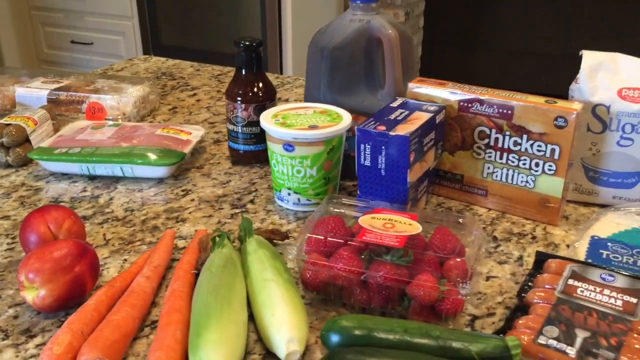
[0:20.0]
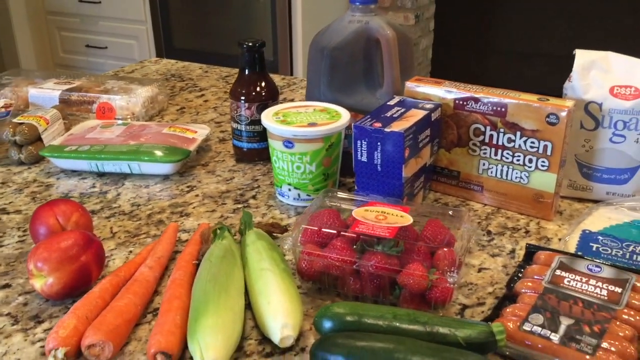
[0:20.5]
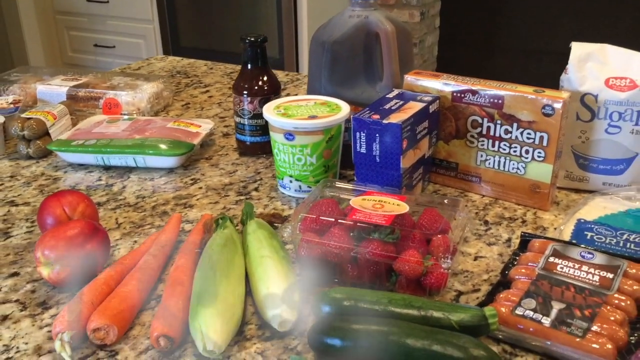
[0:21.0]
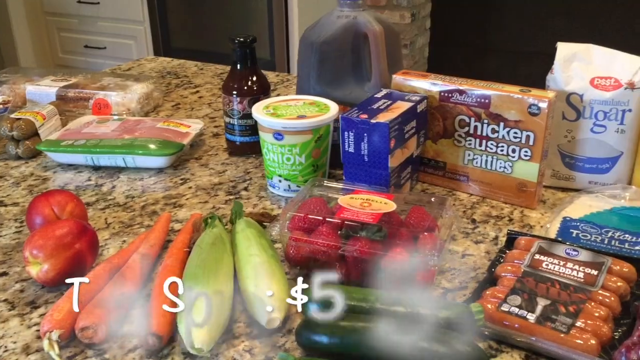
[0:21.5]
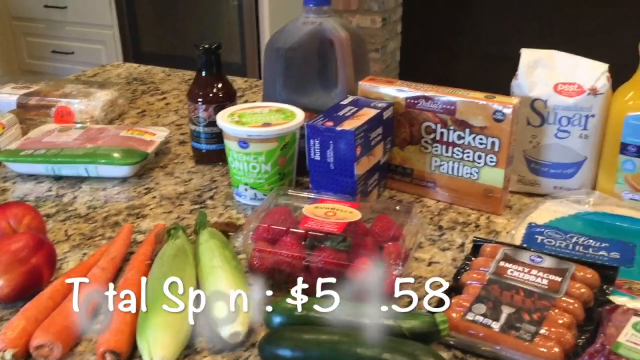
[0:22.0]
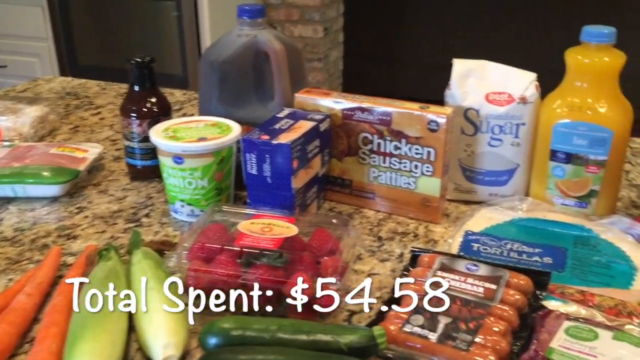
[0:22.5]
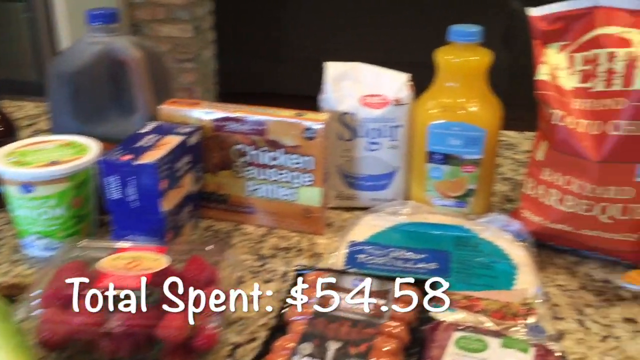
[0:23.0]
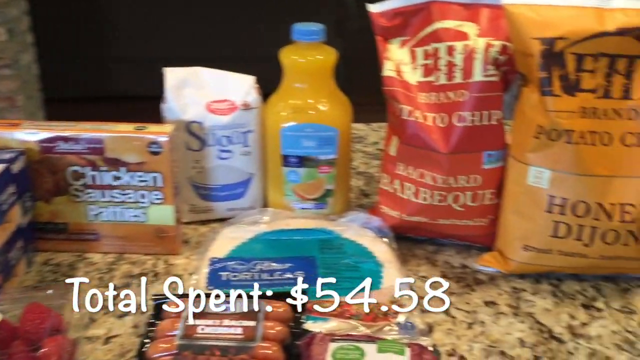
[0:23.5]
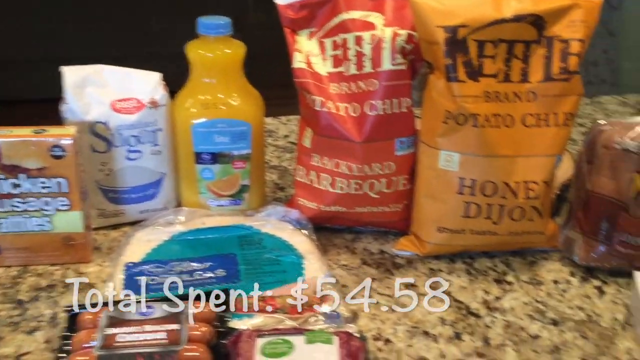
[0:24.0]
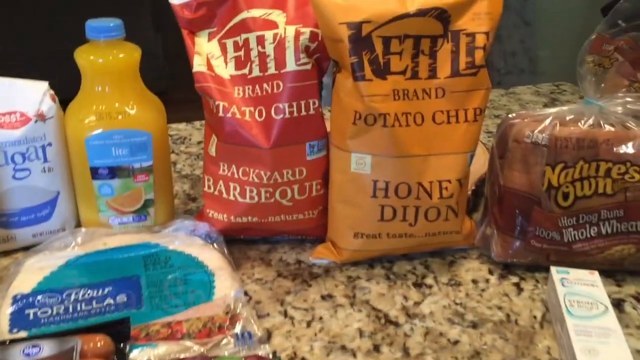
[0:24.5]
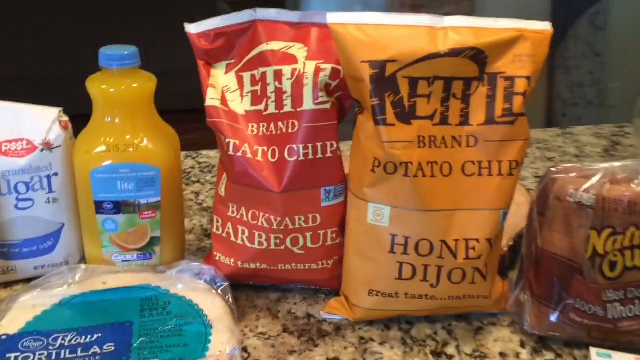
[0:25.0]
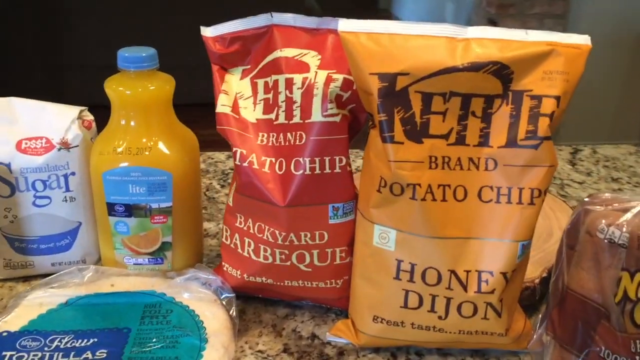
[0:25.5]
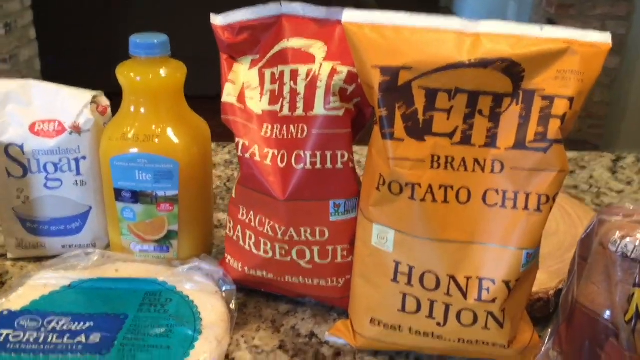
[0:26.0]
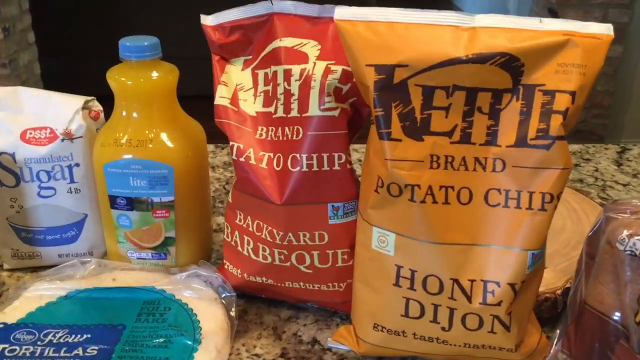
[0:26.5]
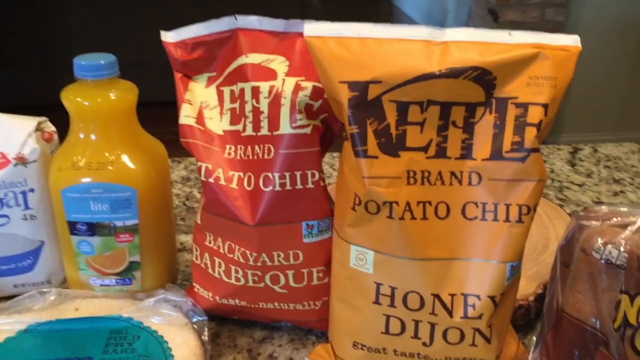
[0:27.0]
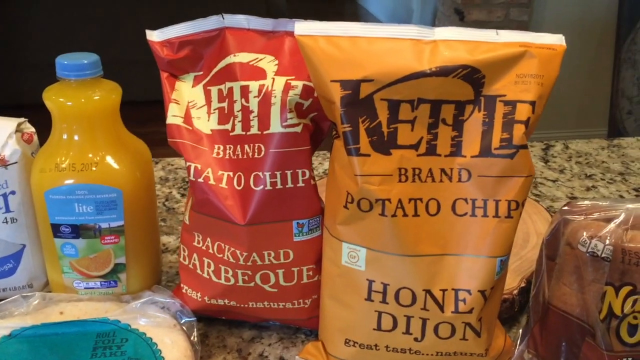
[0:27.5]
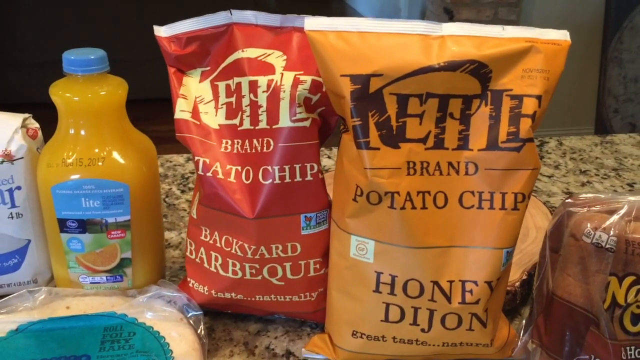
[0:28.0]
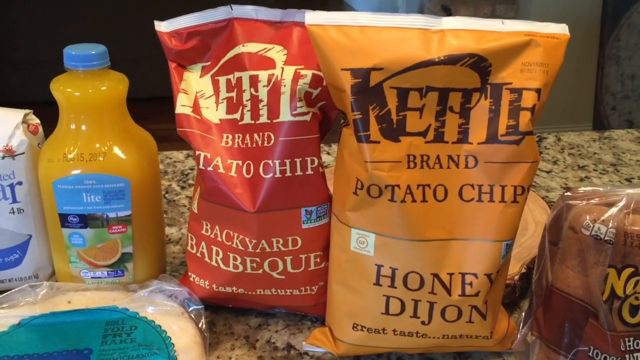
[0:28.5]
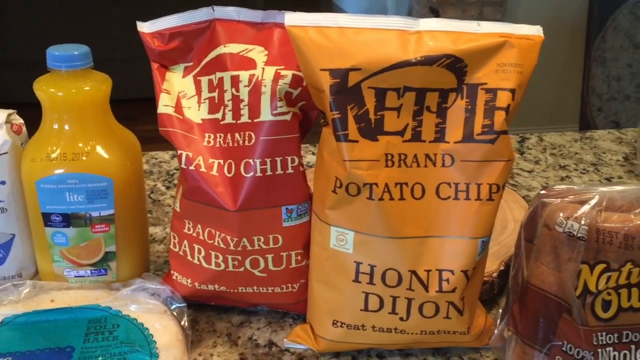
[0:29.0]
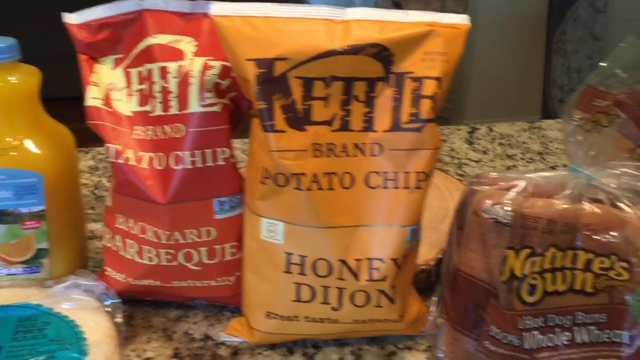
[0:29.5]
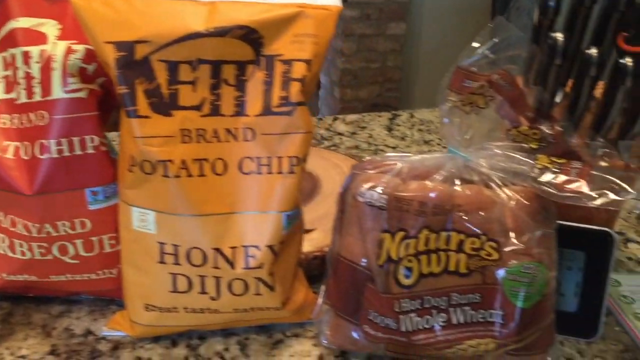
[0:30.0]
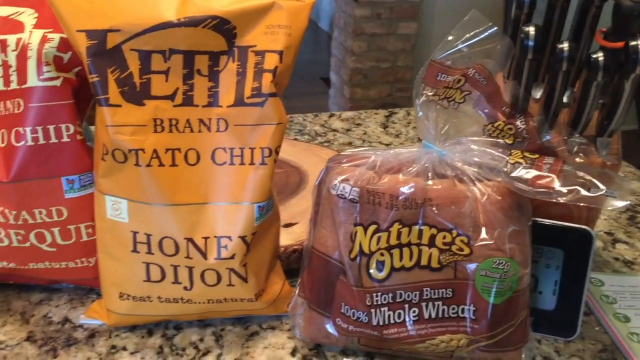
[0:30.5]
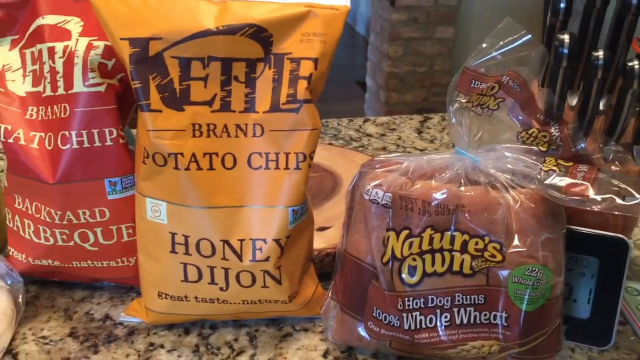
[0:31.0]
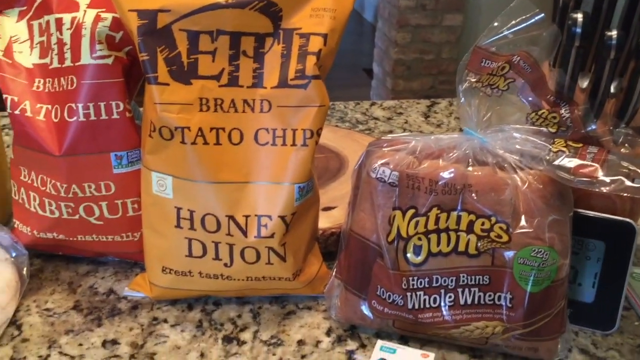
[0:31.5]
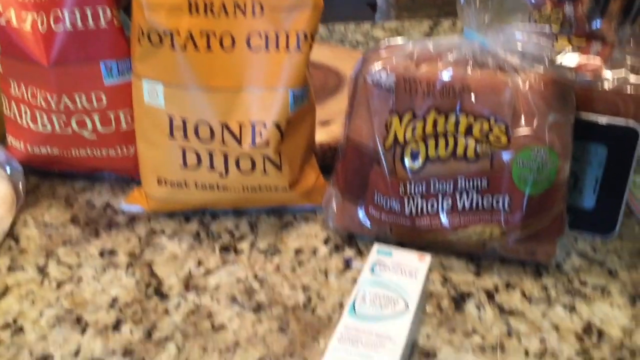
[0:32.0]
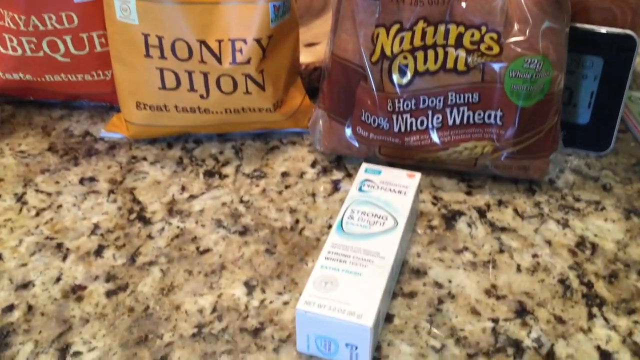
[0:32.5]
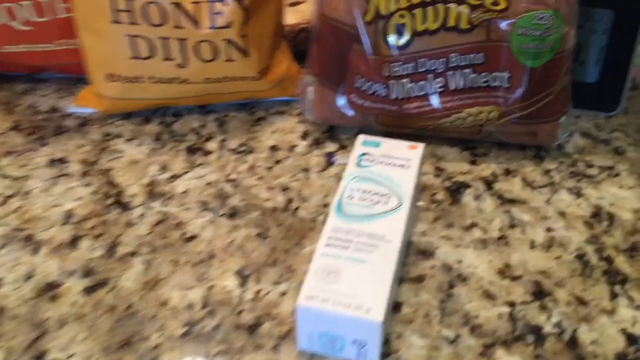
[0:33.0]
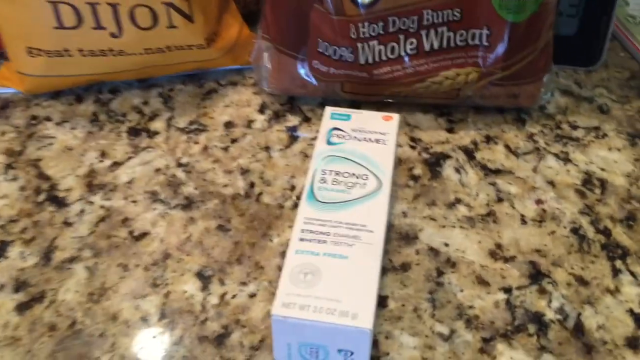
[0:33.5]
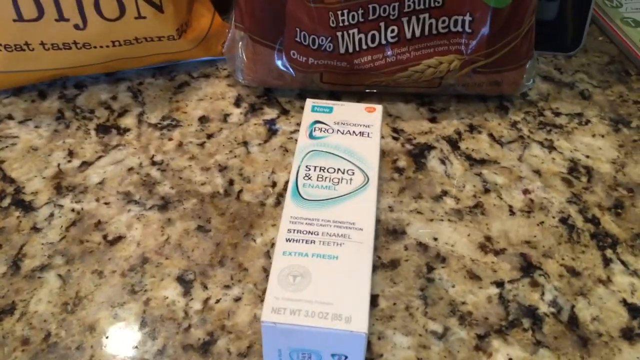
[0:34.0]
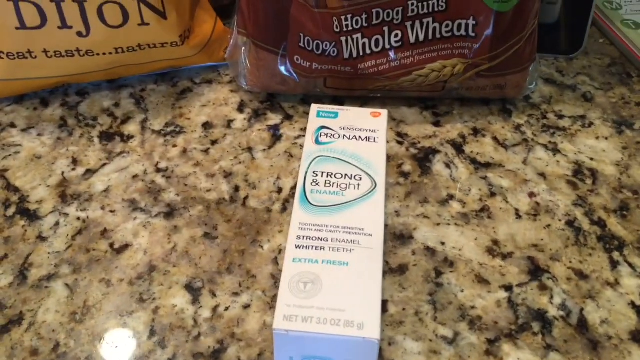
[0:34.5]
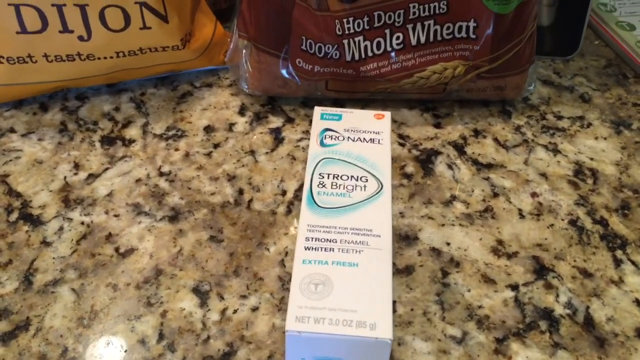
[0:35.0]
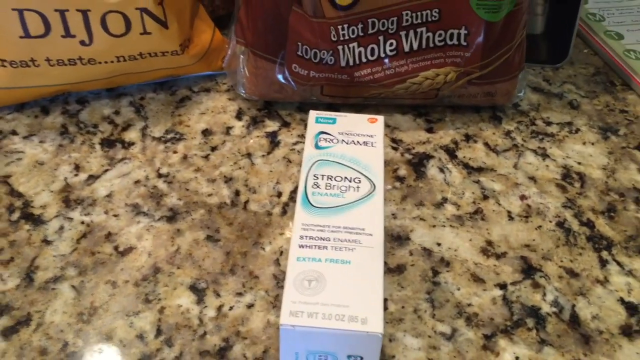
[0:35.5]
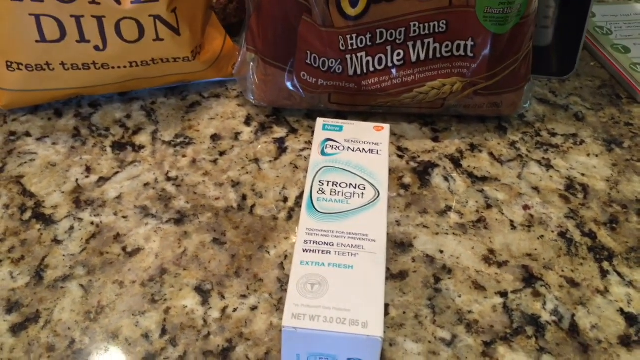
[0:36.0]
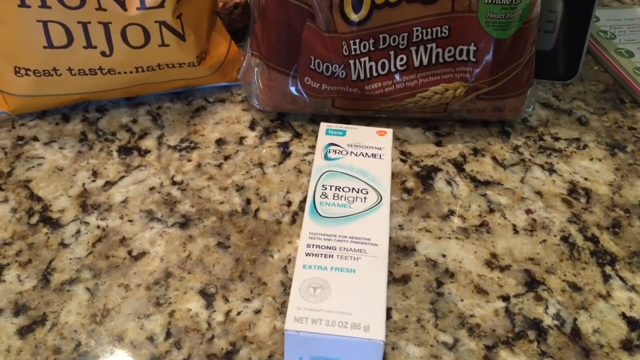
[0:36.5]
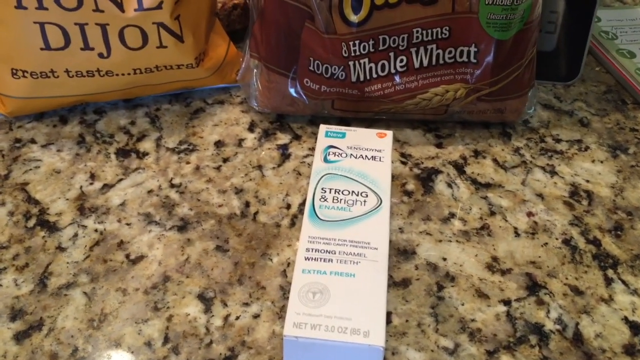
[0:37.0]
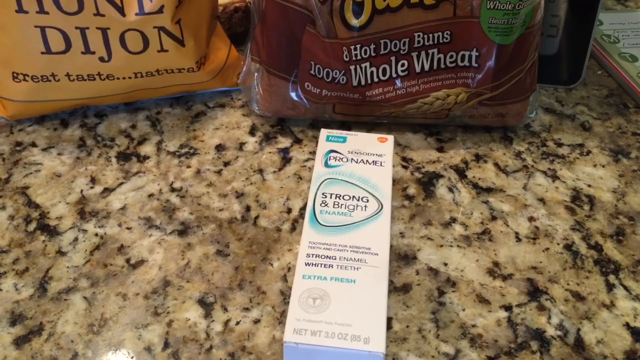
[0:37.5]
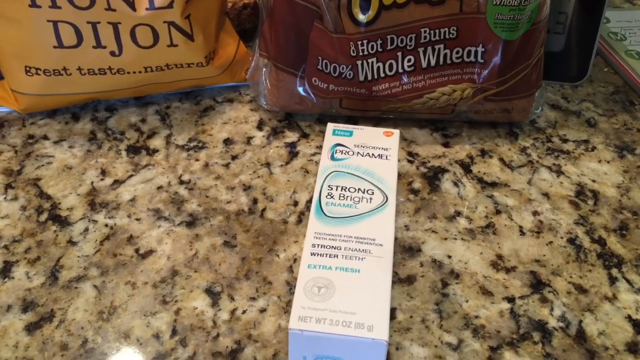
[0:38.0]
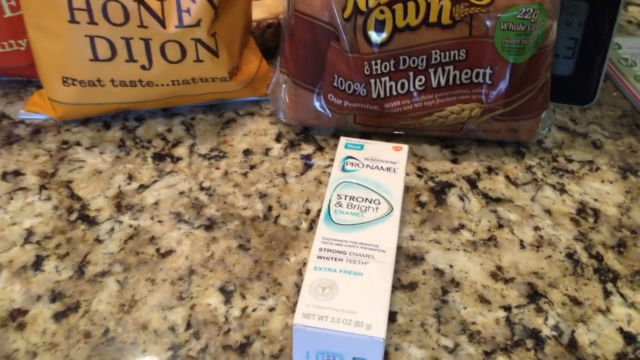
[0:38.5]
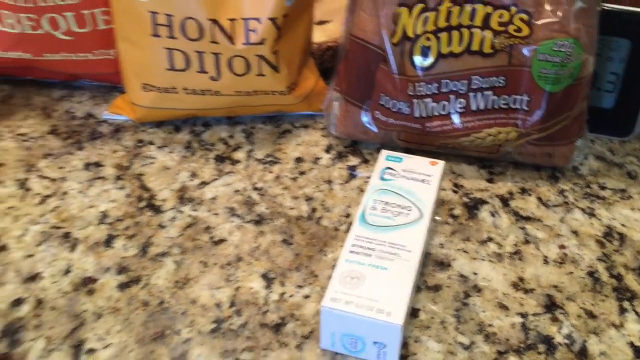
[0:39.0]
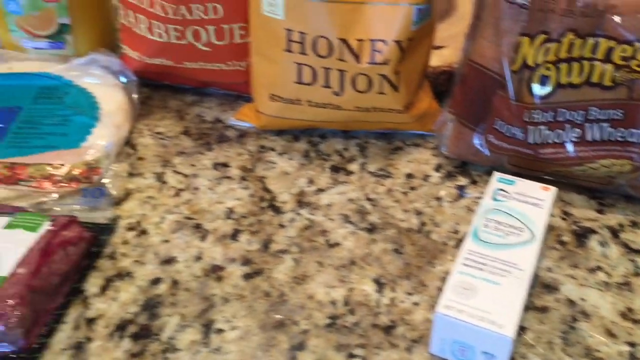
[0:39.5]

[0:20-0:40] The total amount of the grocery purchase is shown as $54.58. The words "strong and bright" apparently appear among the items. There are many things, including potato chips of some brand. The surface of the table is decorated with a lot of art.